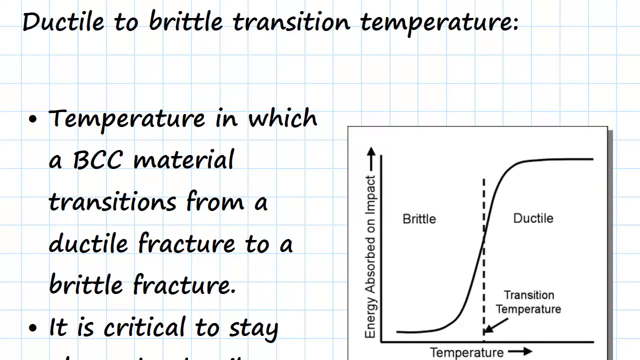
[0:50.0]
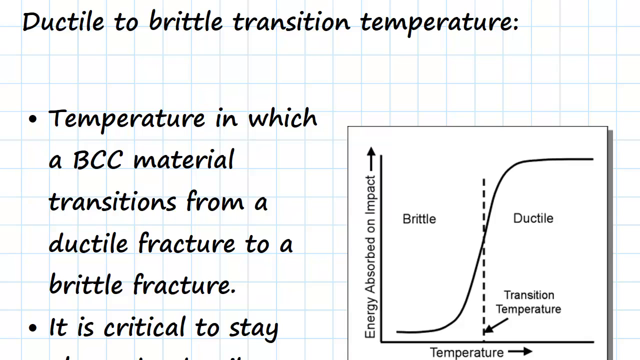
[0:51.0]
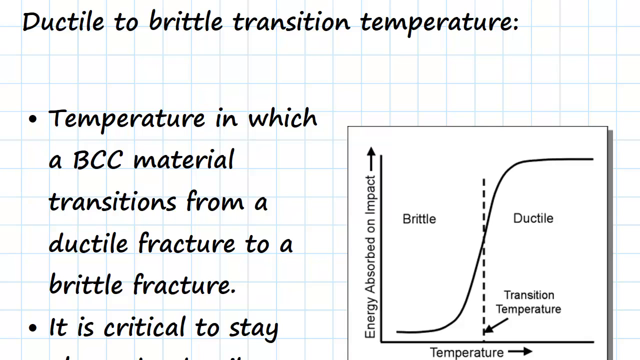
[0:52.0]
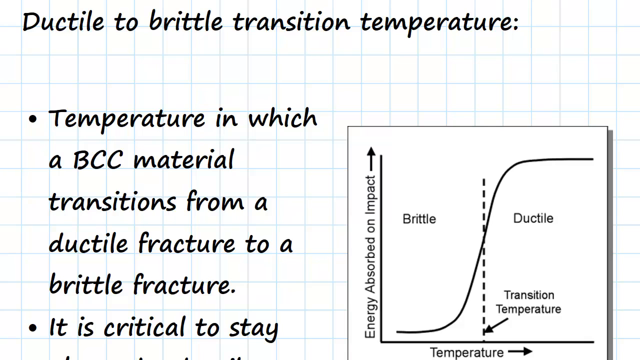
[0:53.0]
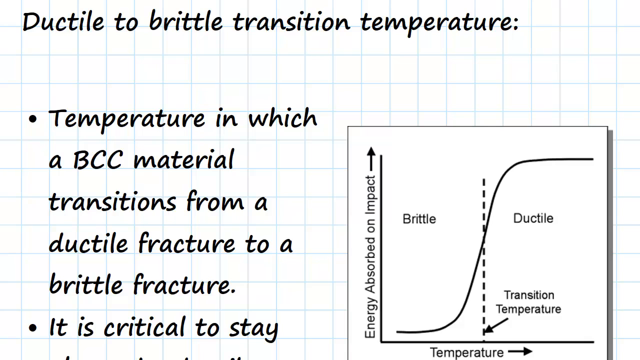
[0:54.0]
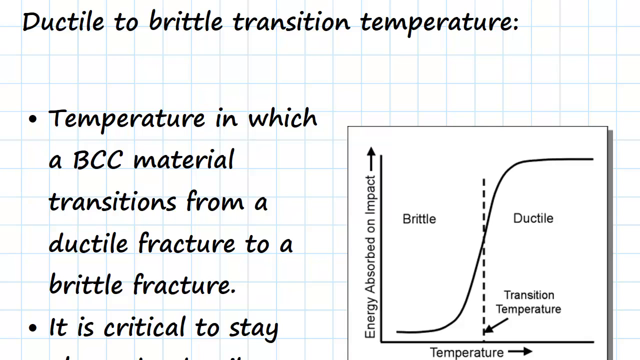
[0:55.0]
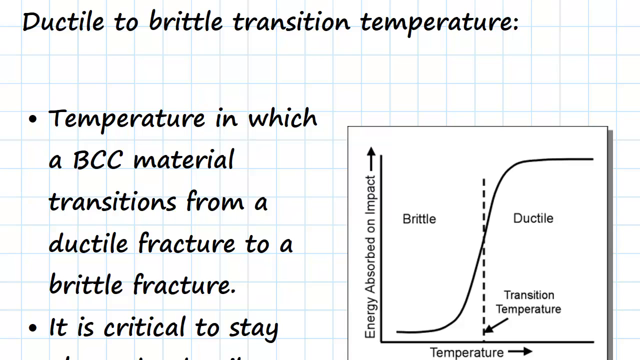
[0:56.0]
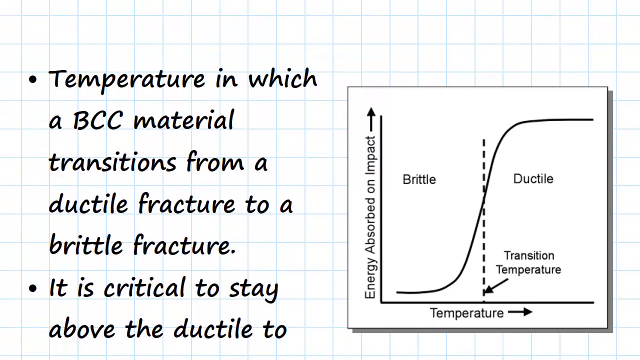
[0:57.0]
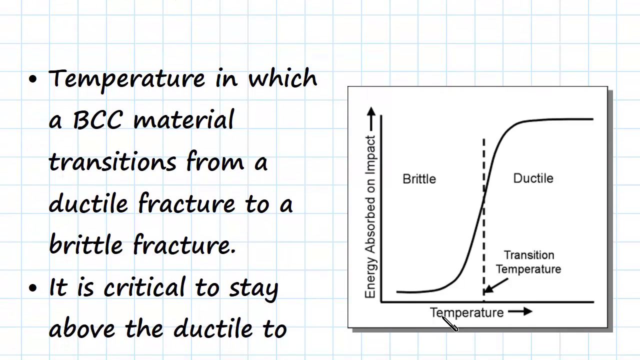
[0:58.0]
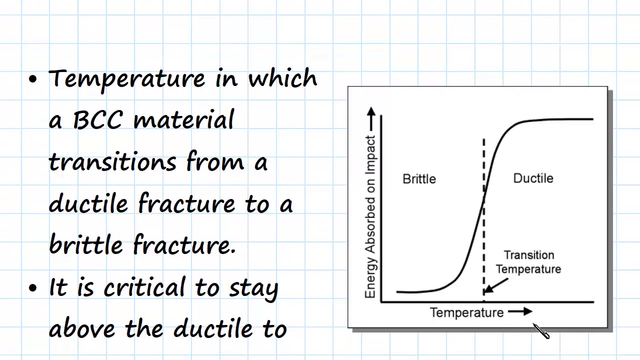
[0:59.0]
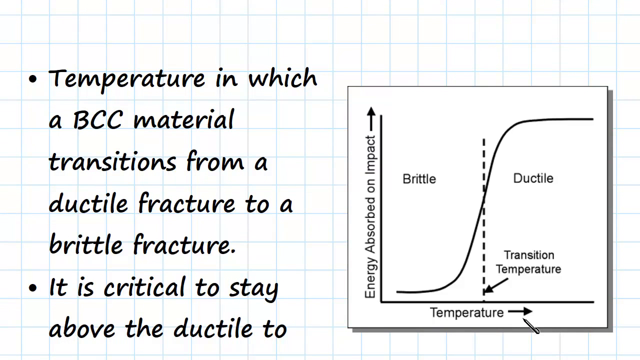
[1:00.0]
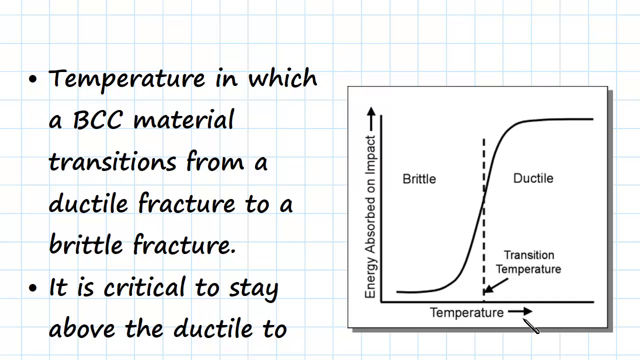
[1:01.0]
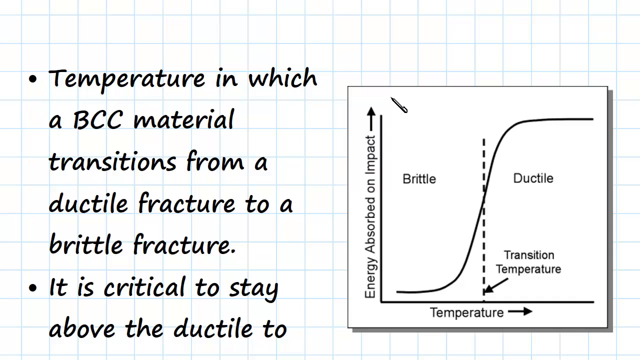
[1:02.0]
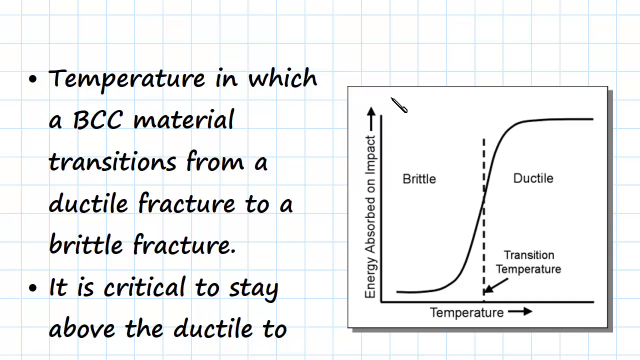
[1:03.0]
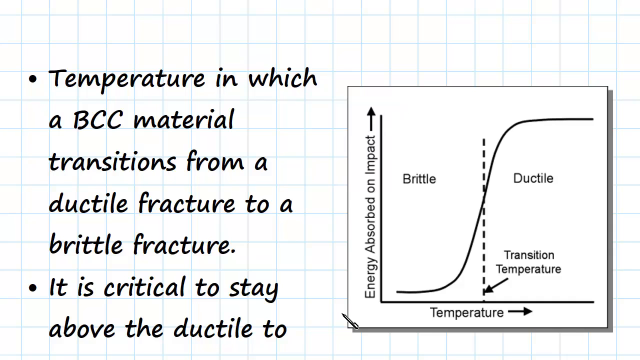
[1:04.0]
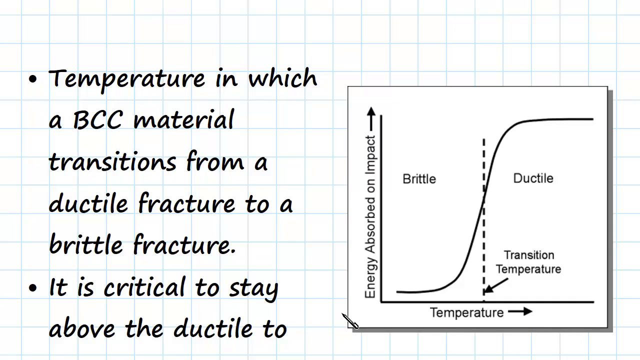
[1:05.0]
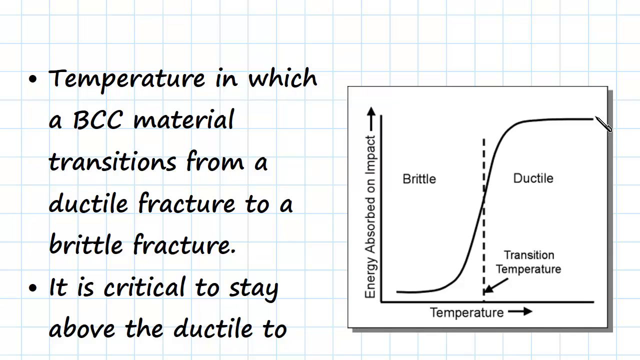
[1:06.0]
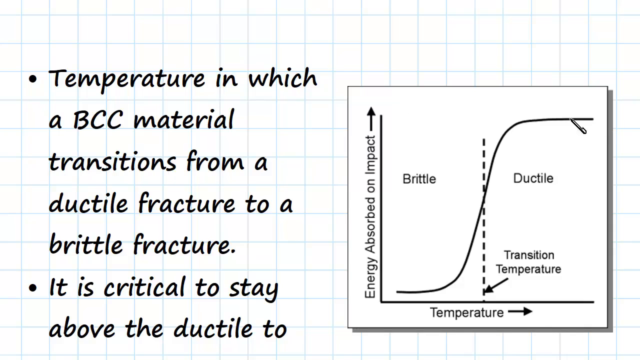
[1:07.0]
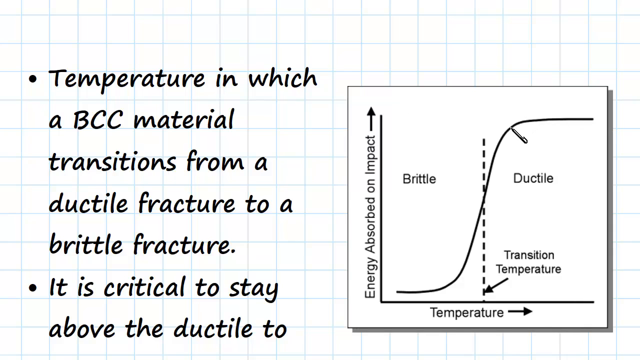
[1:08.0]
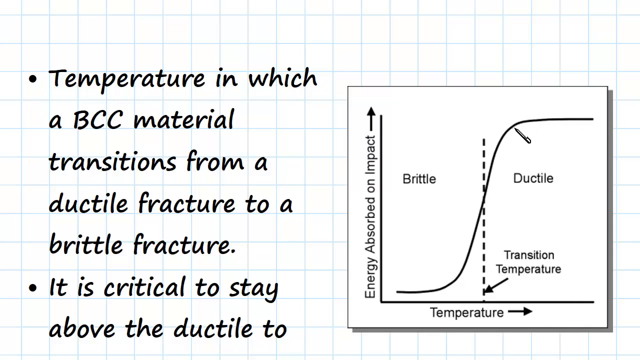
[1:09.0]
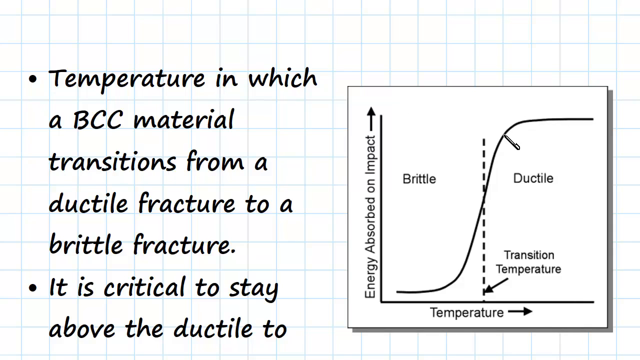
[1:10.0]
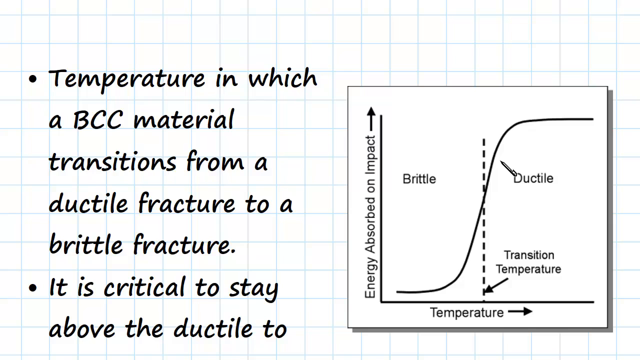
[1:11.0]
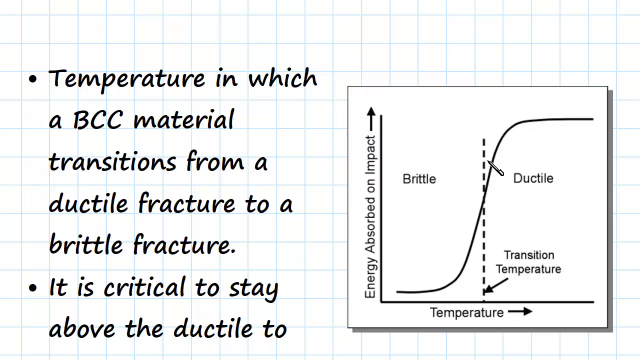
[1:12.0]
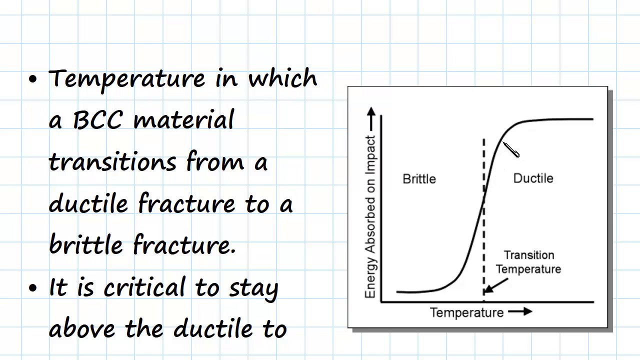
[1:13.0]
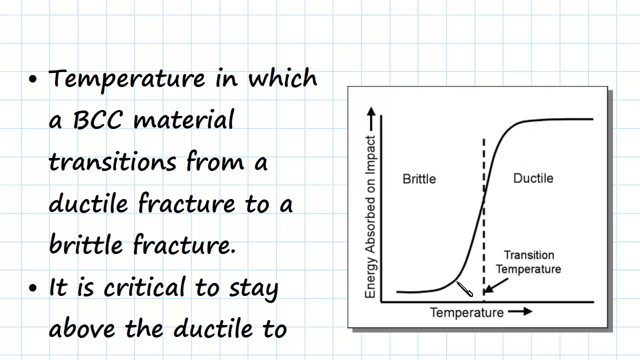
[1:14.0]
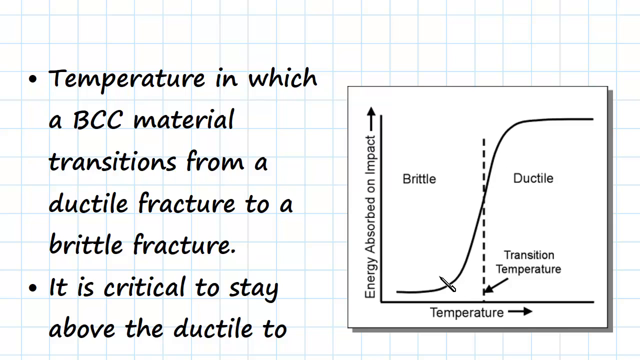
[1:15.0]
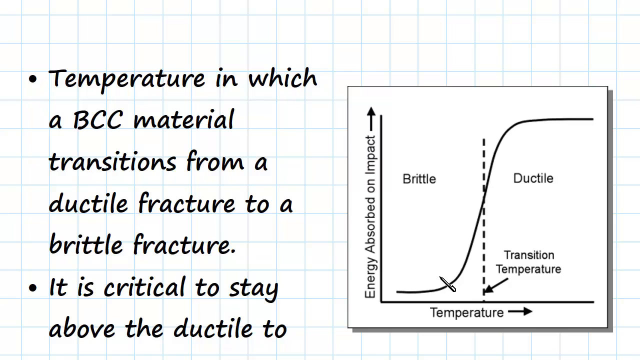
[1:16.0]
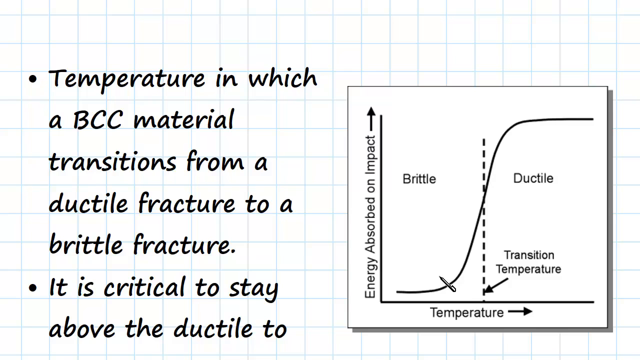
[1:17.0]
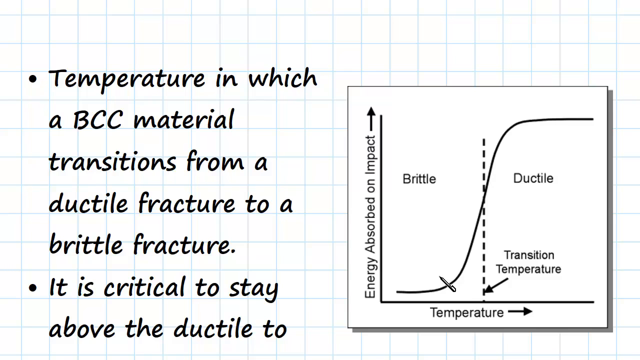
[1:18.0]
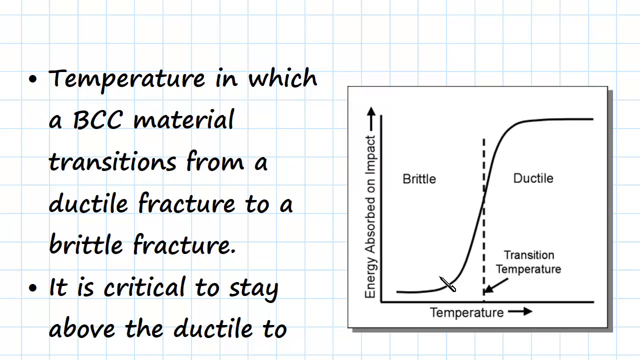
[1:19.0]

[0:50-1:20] The white grid background with blue lines shows the words "ductile to brittle transition temperature", with a bullet below containing "temperature in which a BCC material transitions from a ductile fracture to a brittle fracture". The view slowly scrolls down to the bottom of the screen, where the words "it is critical to stay above the ductile to" are visible and the rest is cut off. A mouse pointer appears, pointing to the line graph on the right. It moves back and forth along the bottom line of the graph, pointing at the word "temperature" and its arrow. It then goes to the top left, pointing at the arrow above the word "impact", then to the bottom left corner of the graph. Next it goes to the top right of the graph, pointing at the tip of the line, moves back and forth in between, then goes down and up multiple times before stopping at the lower position.